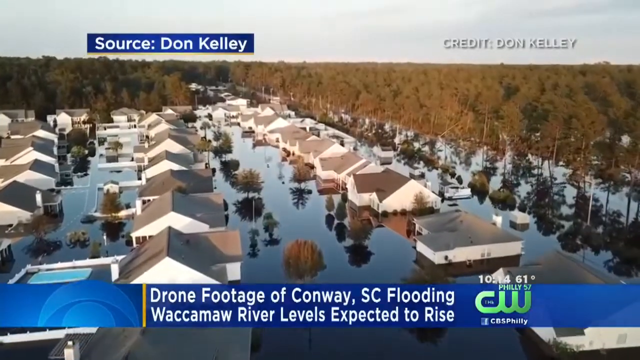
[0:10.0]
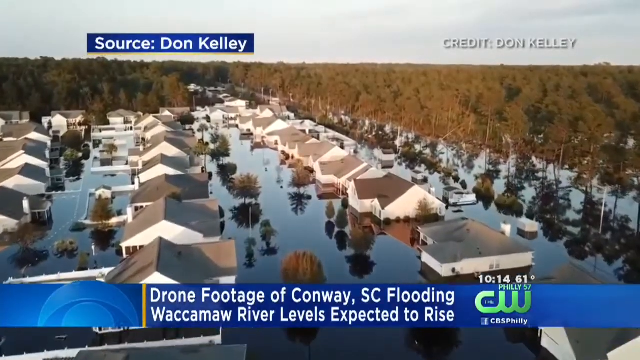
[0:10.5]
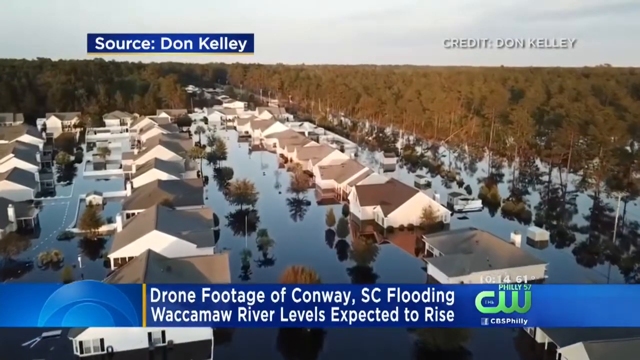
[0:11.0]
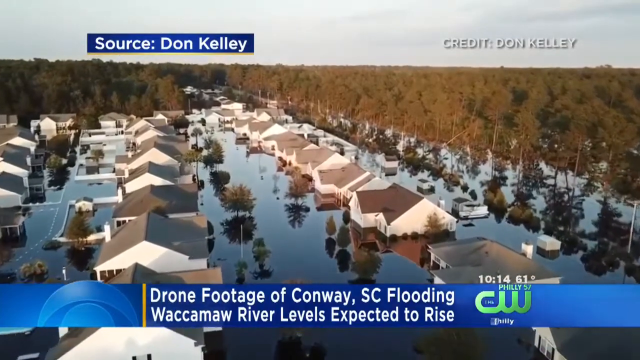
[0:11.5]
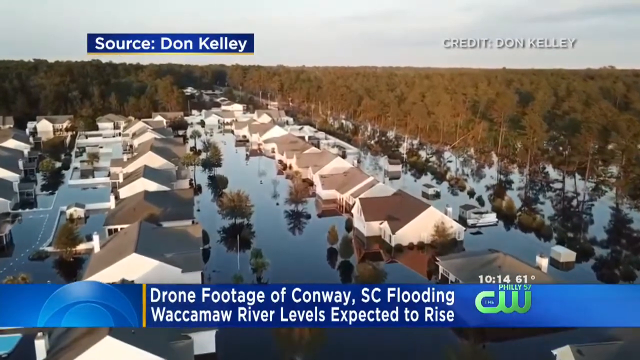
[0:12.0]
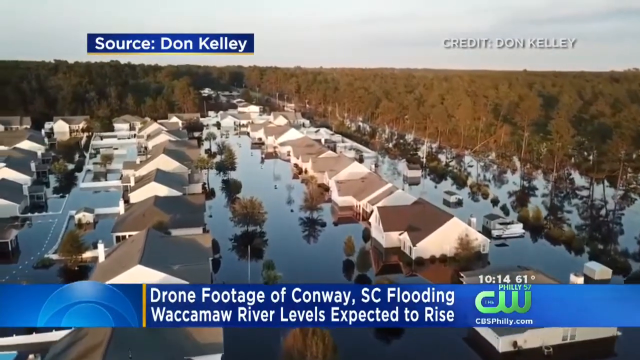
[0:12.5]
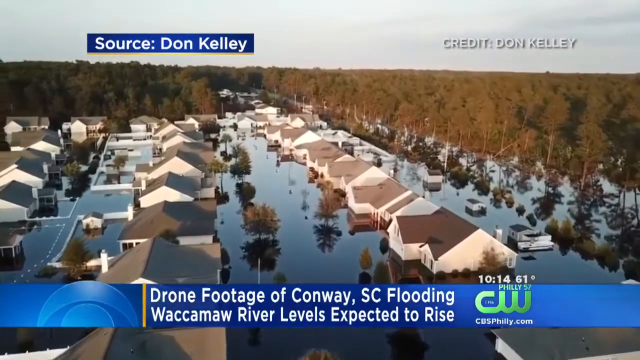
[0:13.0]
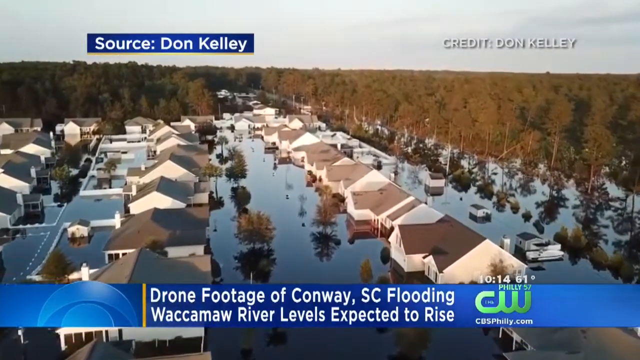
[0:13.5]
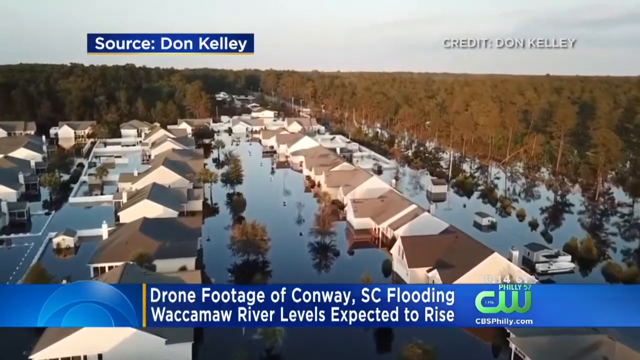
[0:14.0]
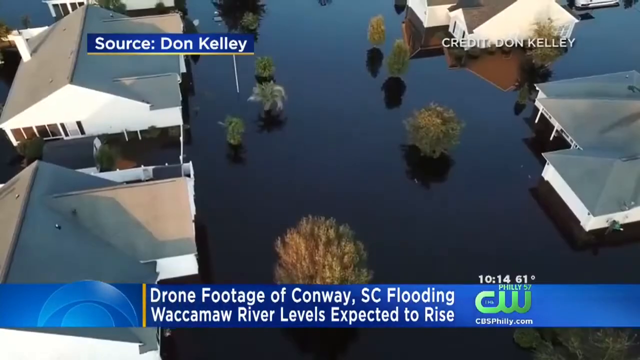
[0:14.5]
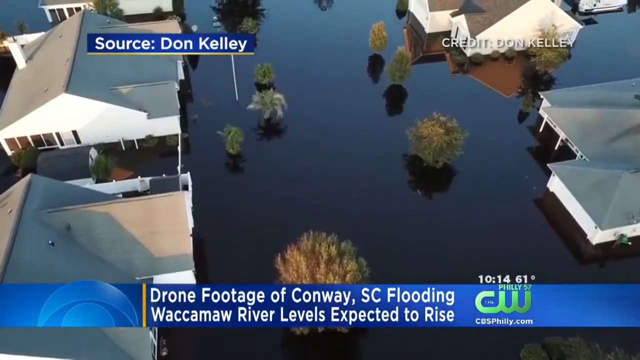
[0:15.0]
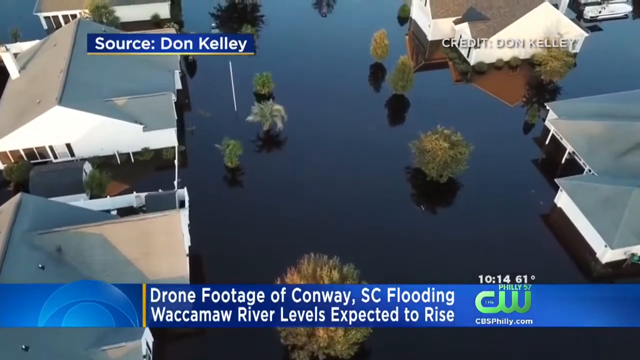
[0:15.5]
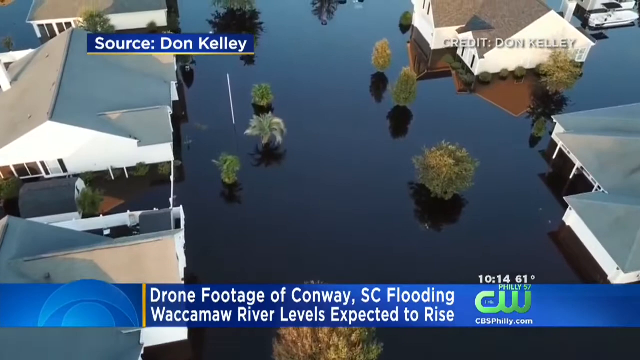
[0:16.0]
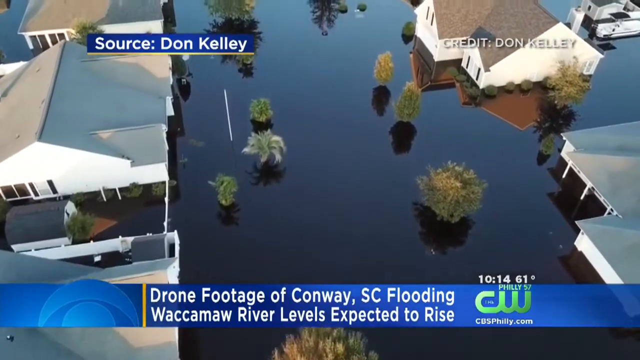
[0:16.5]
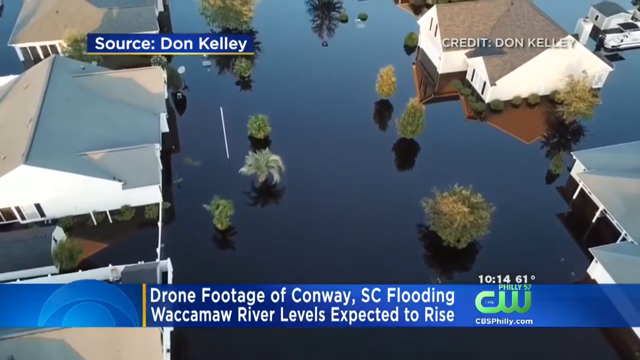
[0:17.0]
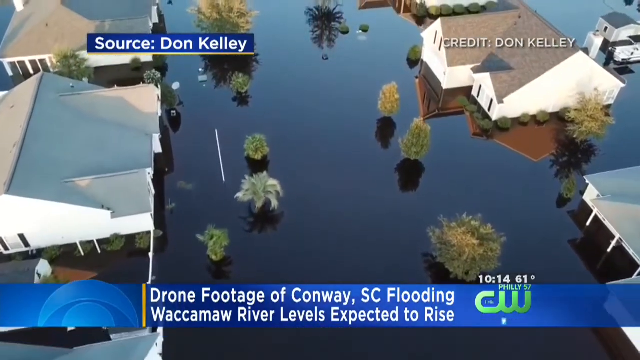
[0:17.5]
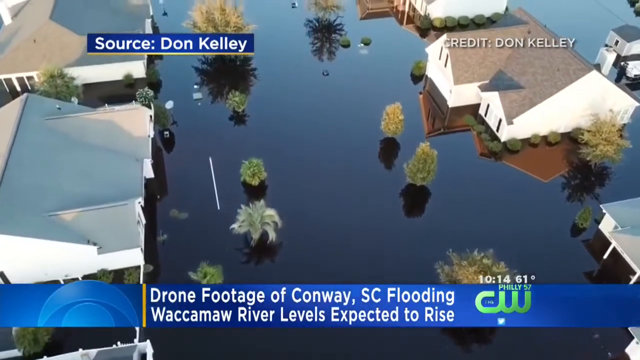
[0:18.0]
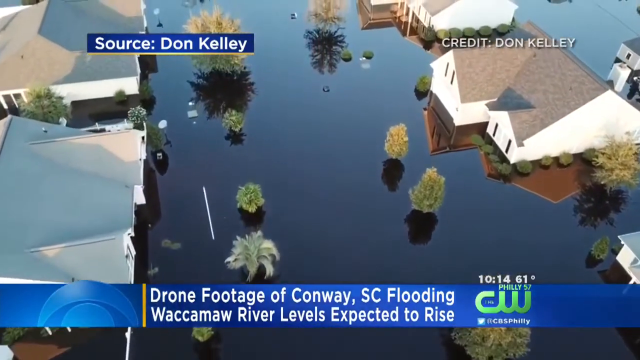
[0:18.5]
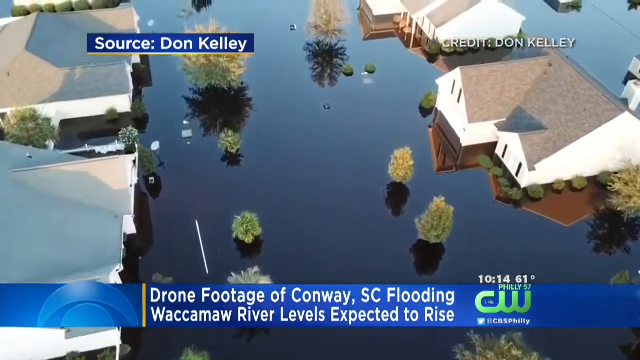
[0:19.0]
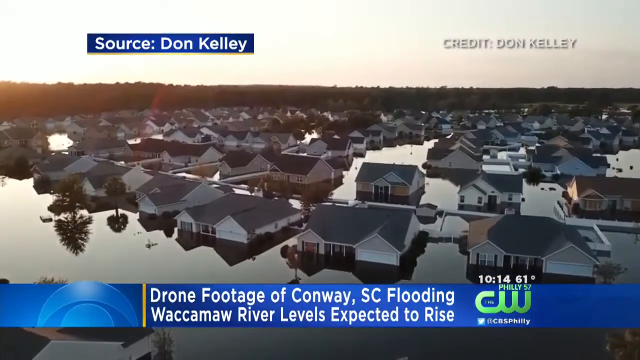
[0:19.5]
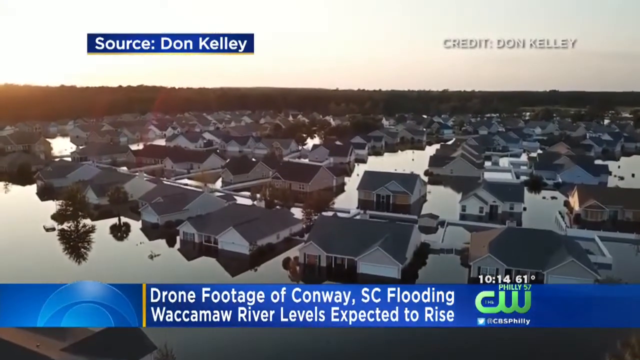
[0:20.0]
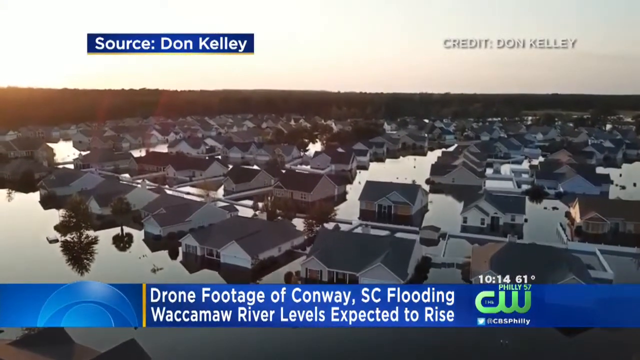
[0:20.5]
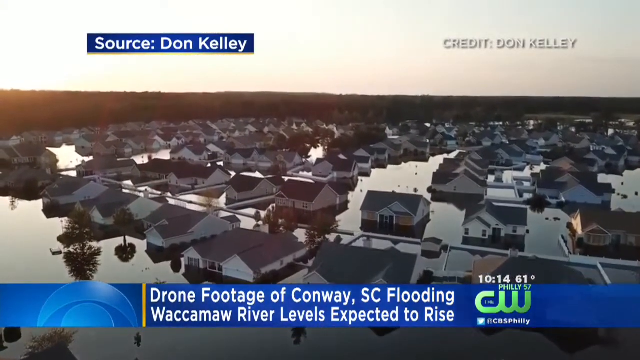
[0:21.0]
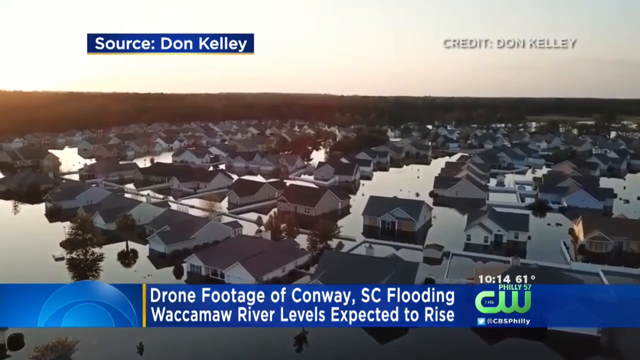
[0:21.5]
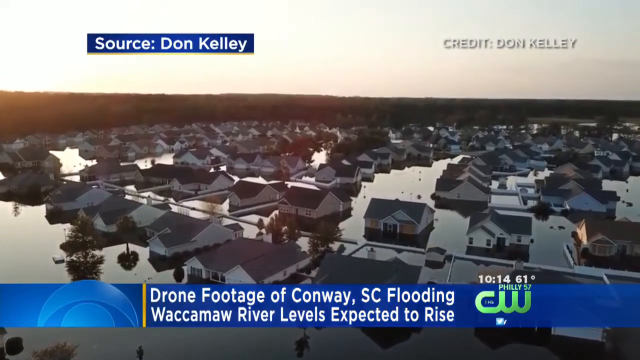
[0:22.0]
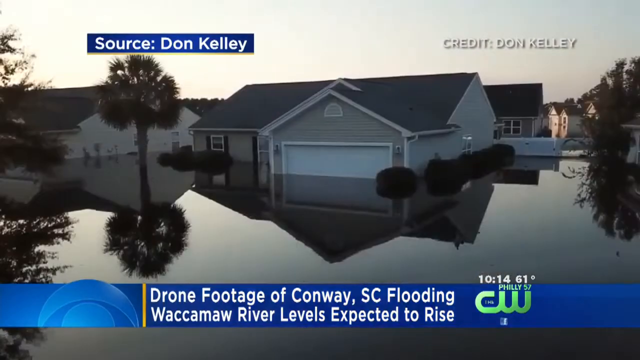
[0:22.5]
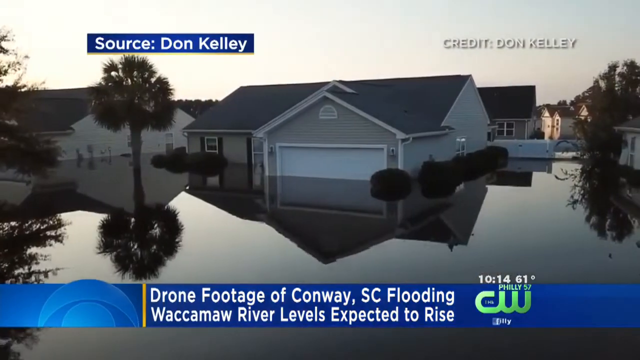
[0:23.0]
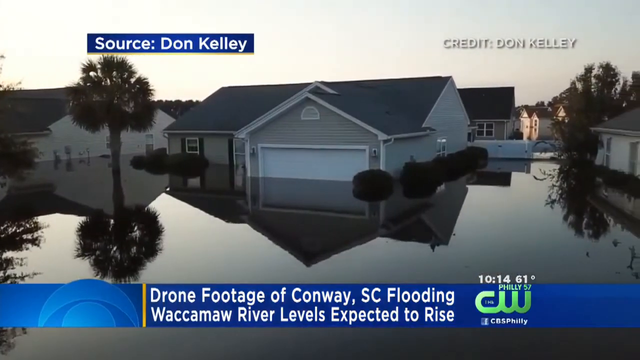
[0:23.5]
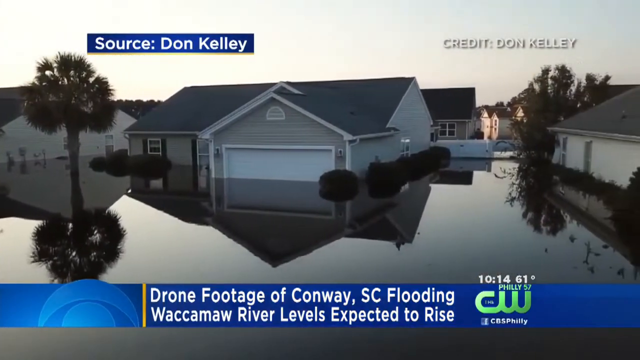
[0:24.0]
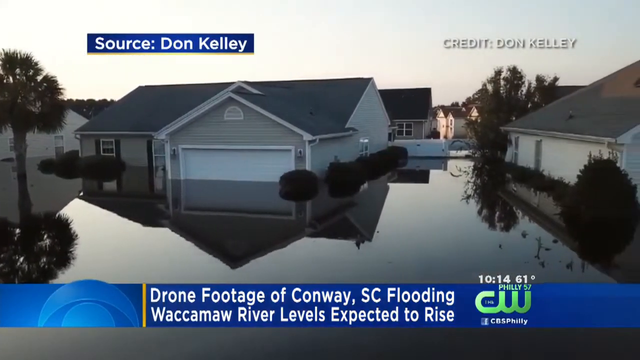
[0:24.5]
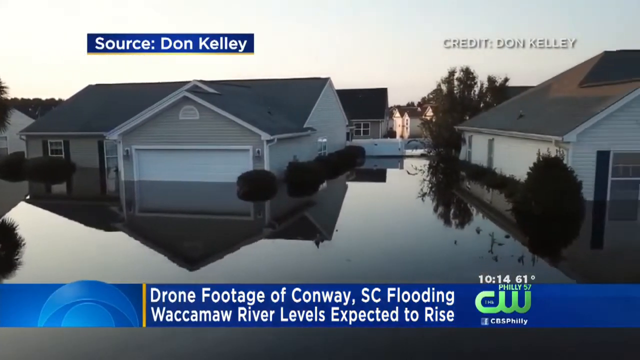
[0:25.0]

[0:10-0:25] More houses sitting in water appear in drone footage of Cronway flooding. One house is visible with its garage door, showing where the water level is; half of the house is under the water. There are many houses, possibly hundreds, and they are all sitting in water.